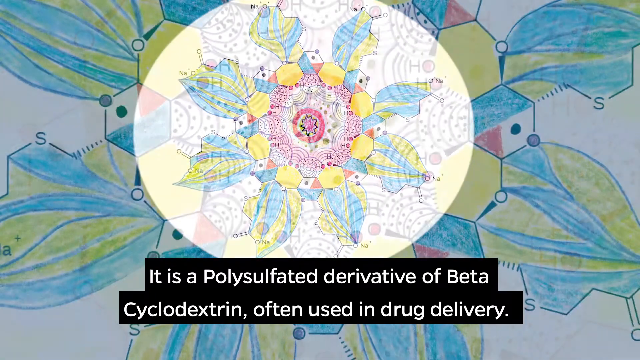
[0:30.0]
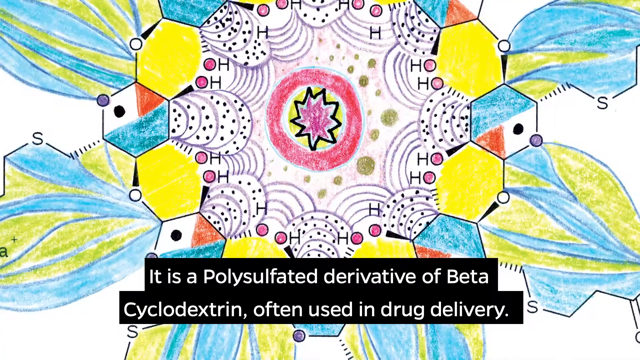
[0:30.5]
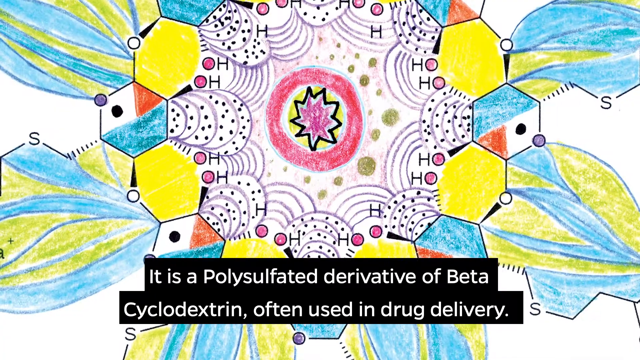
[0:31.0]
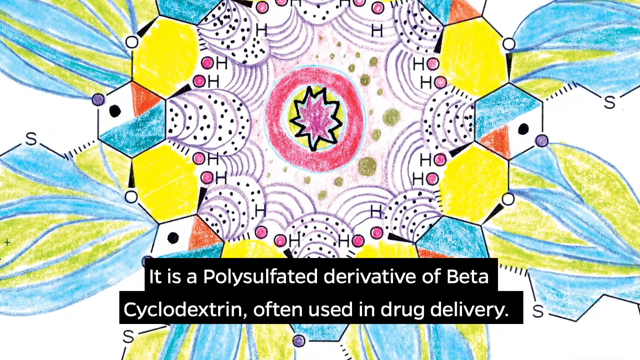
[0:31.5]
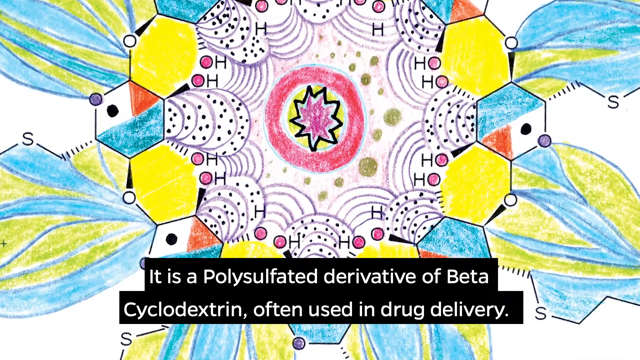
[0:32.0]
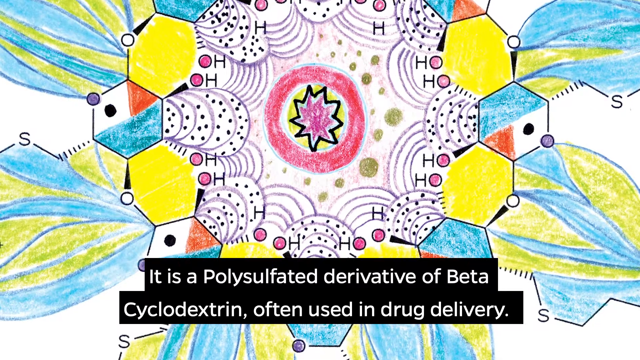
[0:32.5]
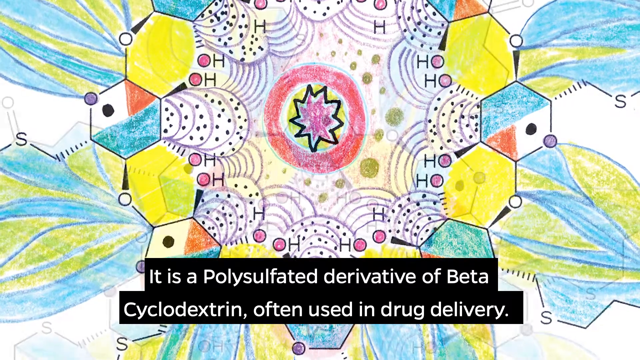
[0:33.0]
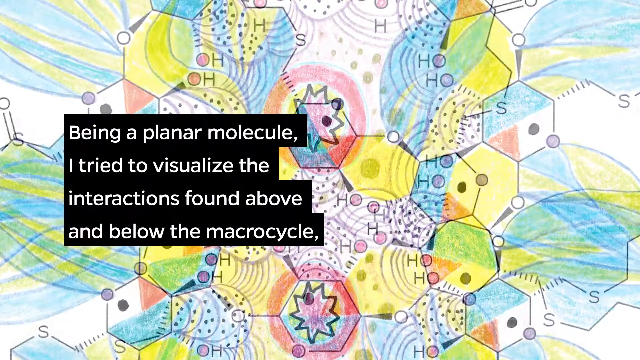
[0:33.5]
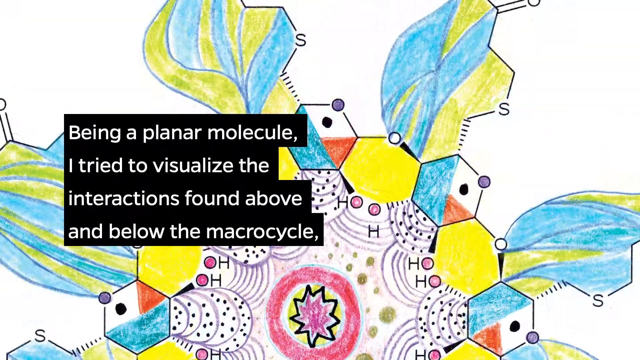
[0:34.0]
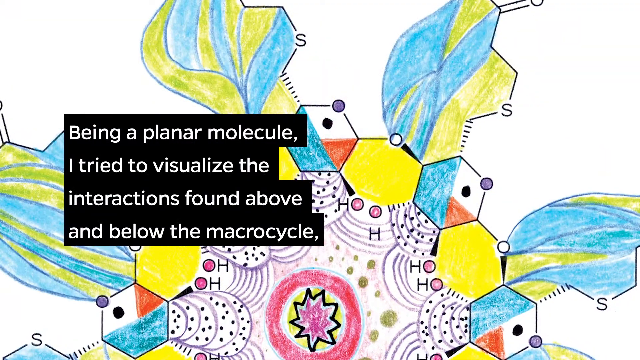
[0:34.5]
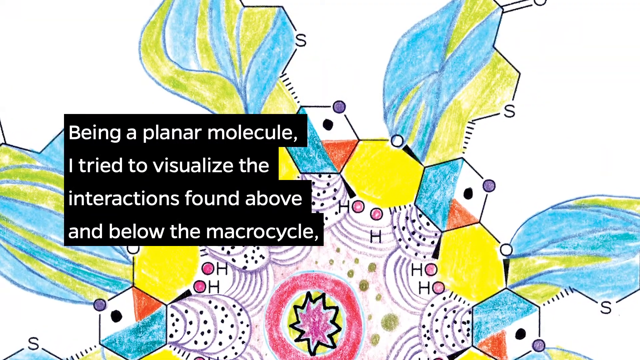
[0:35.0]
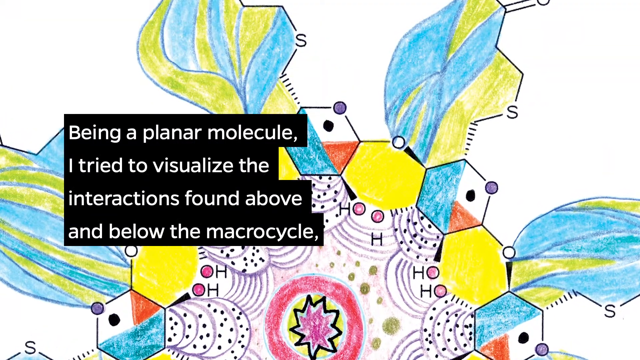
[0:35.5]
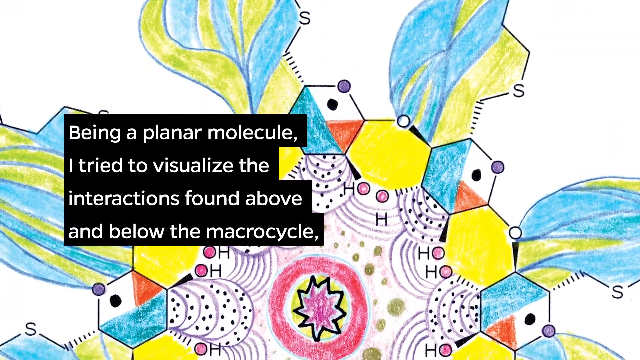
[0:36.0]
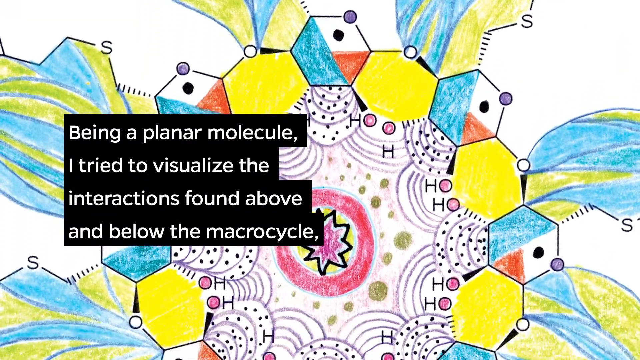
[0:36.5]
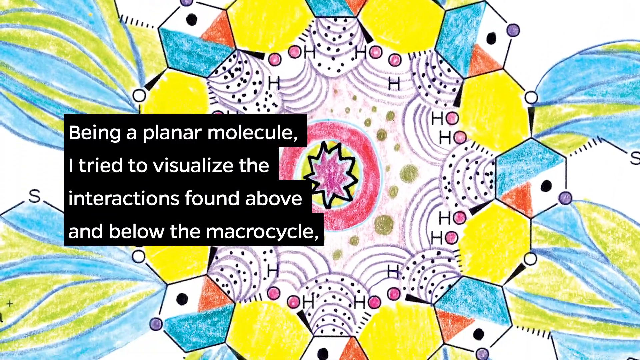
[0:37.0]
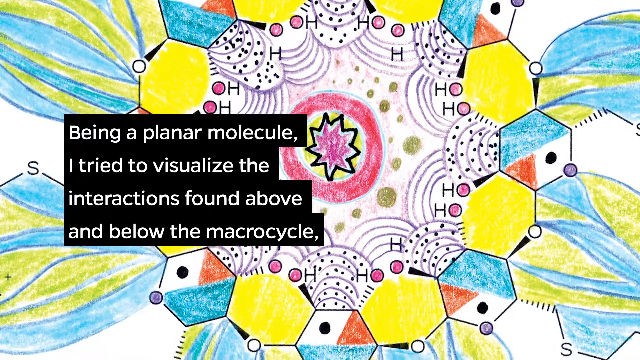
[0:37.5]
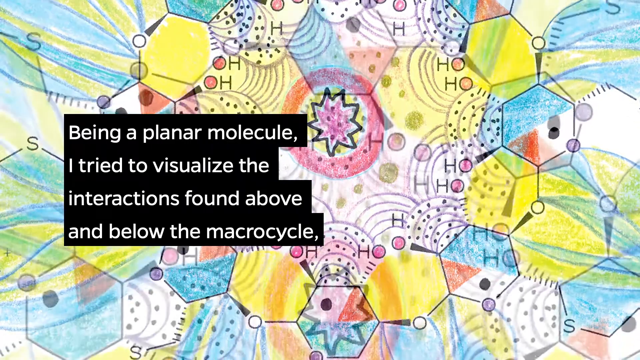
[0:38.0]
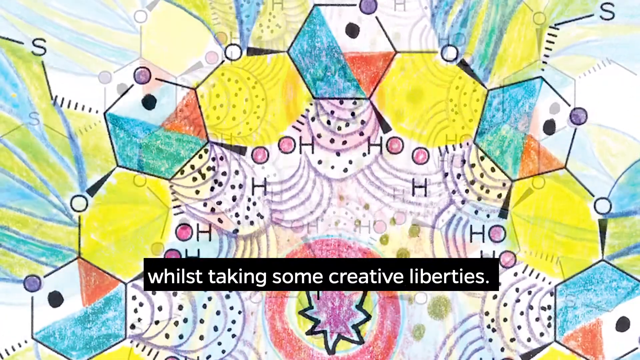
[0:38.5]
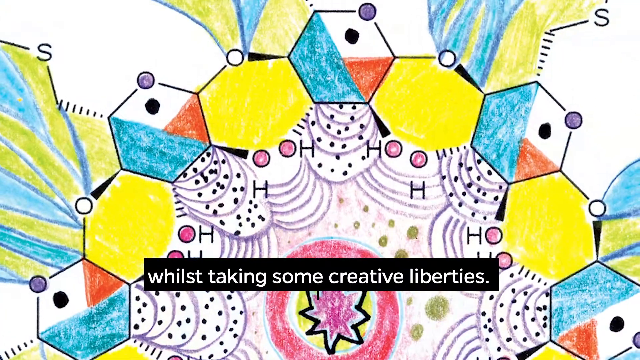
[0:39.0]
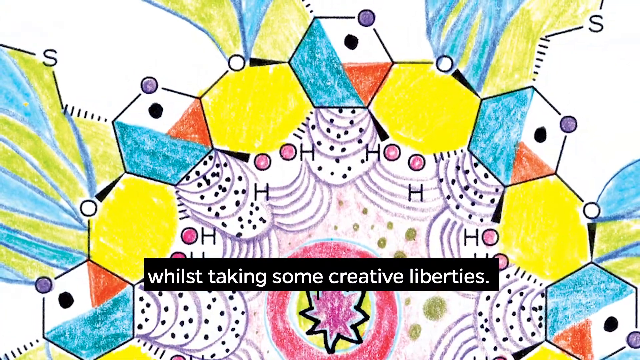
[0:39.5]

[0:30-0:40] The screen continues to show the oval in the top centre containing the hand-drawn illustration. The shot then cross-dissolves into a close-up of the illustration so that it spans the entire screen and extends off the sides, top and bottom. The camera keeps moving in on the image as the caption underneath disappears and black boxes with white text appear in the middle left of the image, reading 'being a planar molecule, I tried to visualise the interactions found above and below the macrocycle'. The video changes to a different shot of the hand-drawn image and then digitally pans down to the left. It then cross-dissolves to another shot of the image while the text underneath changes to say 'whilst taking some creative liberties.'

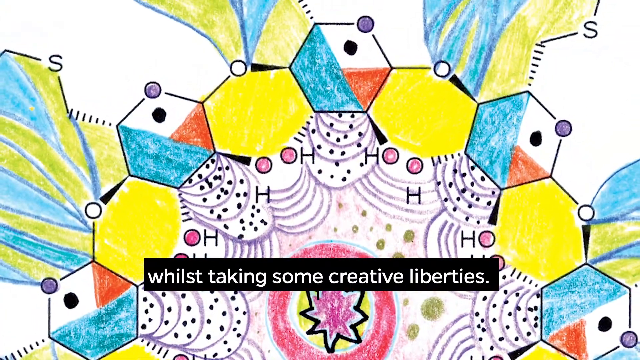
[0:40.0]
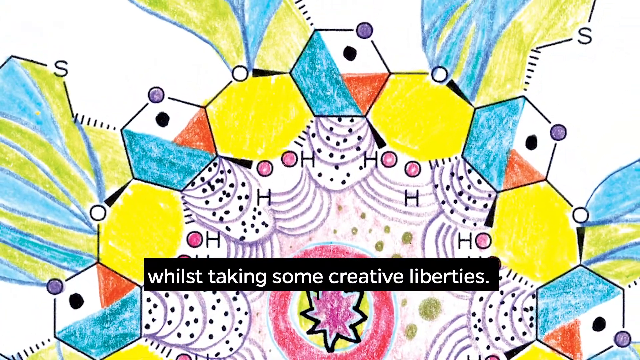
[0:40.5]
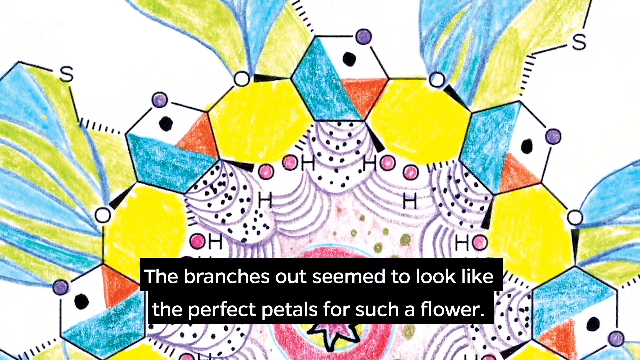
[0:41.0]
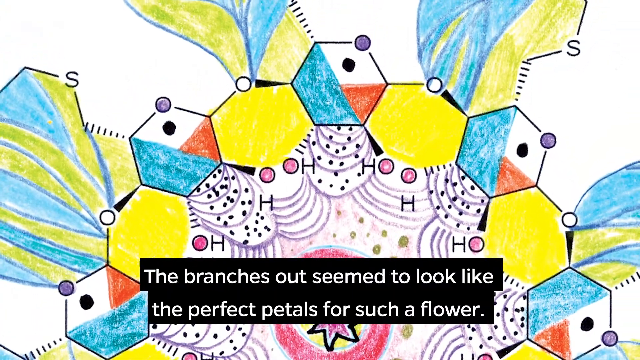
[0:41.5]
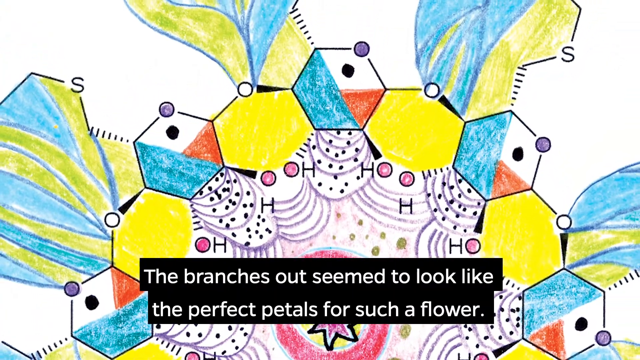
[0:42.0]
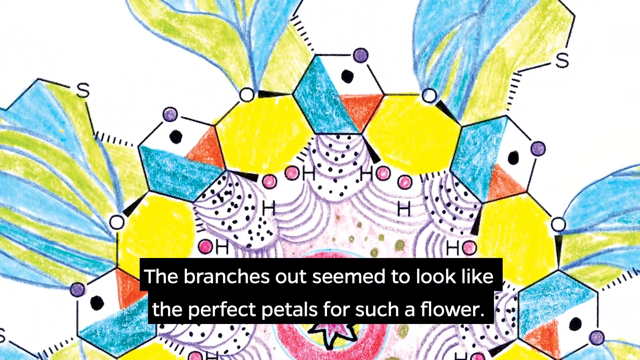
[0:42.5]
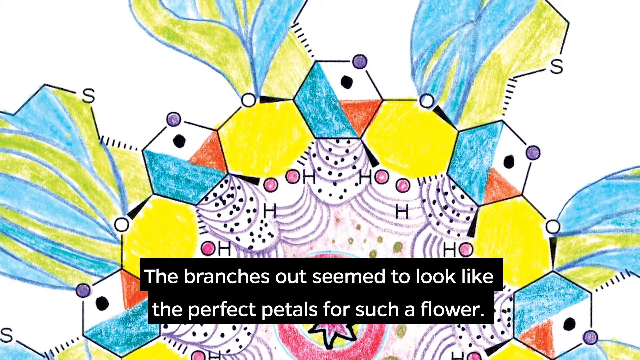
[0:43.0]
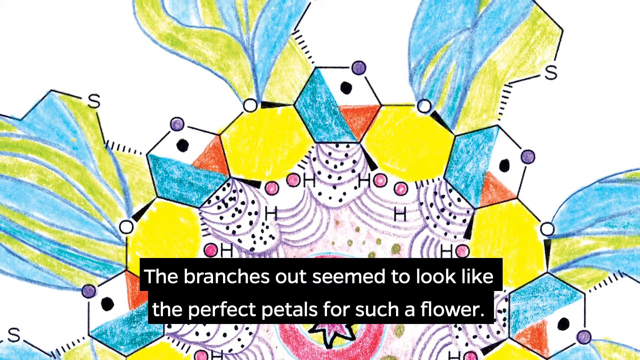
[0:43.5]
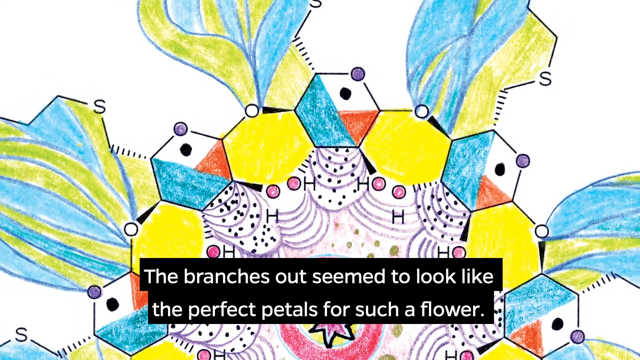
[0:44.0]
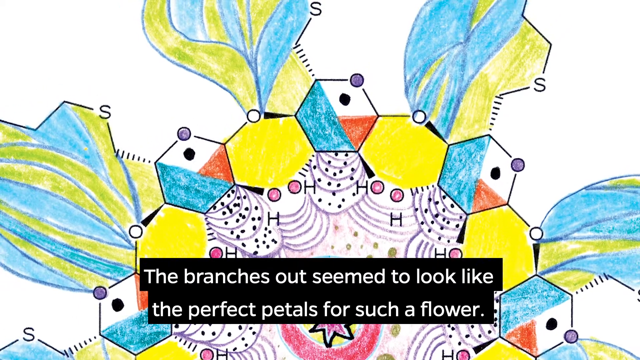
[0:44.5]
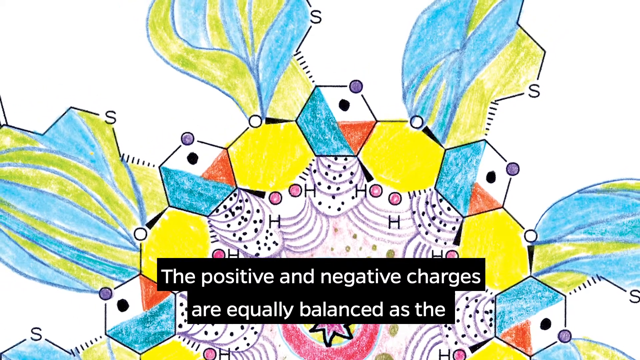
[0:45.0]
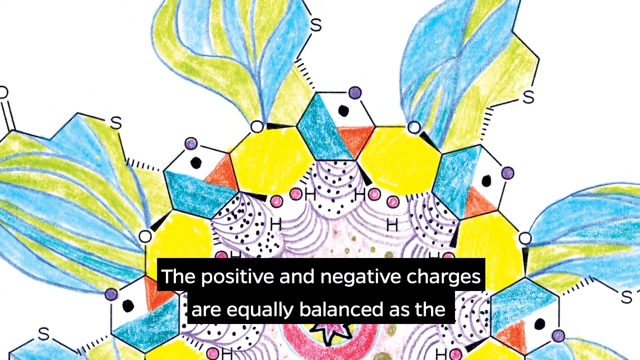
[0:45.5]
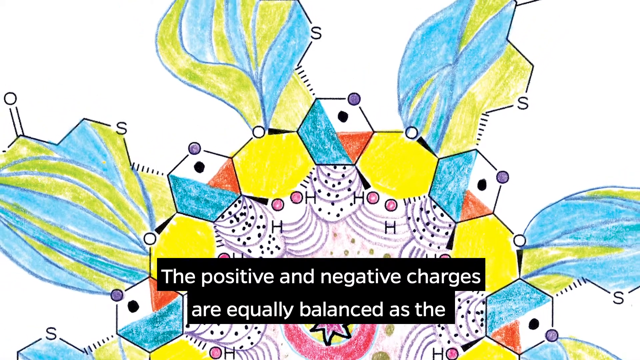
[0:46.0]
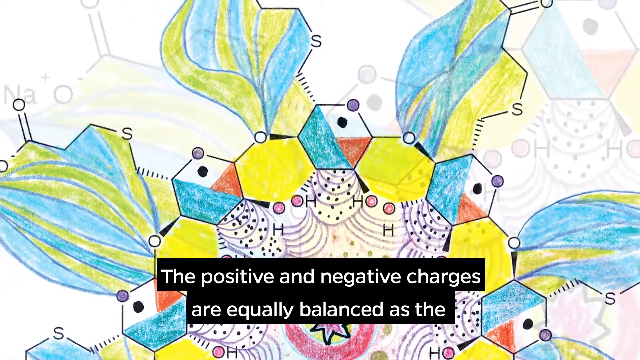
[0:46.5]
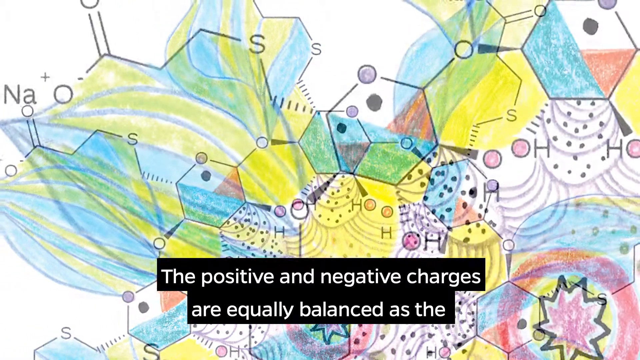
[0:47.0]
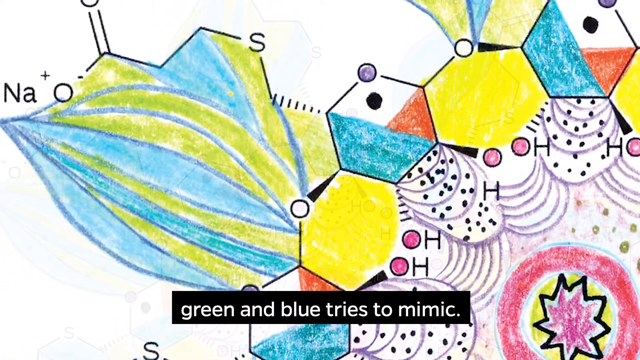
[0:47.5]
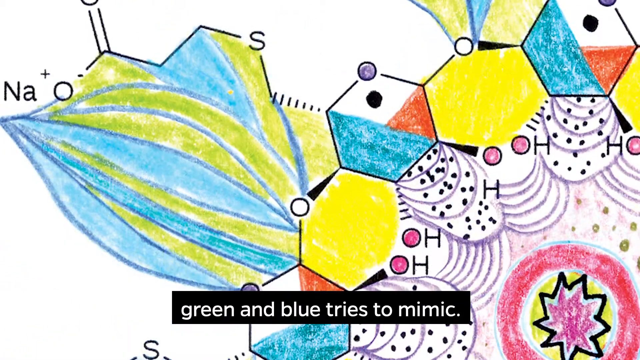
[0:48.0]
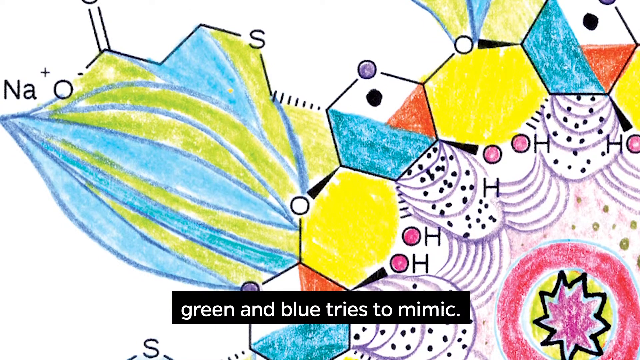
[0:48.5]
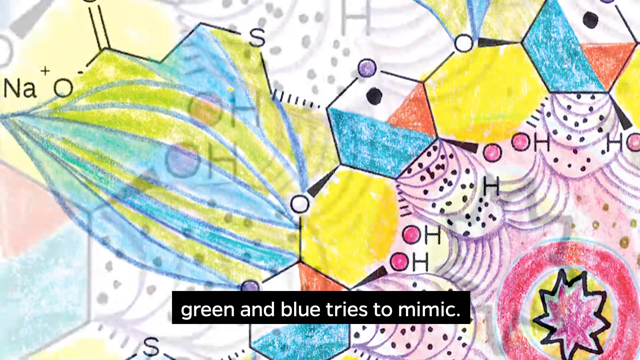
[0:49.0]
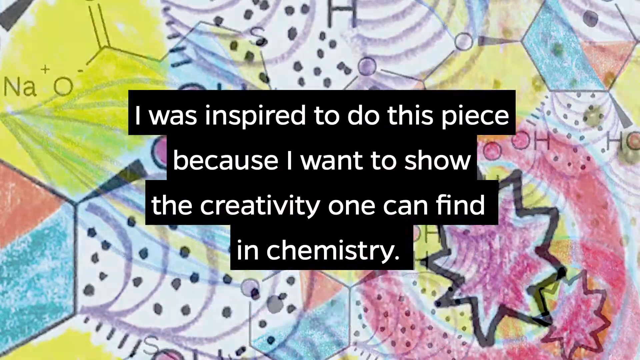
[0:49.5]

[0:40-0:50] The view zooms out from the colourful hand-drawn image, which fills the screen and extends beyond it at the top, bottom, left and right. Black horizontal boxes at the bottom of the screen present white text saying 'the branches out seem to look like the perfect petals for such a flower'. The black boxes then update to present the text 'The positive and negative charges are equally balanced as the'. The slow zoom out continues before a cross-dissolve to a different part of the drawing, slowly panning down, while the text in the black box changes to read 'green and blue tries to mimic'. The video cuts to another very close-up shot of the drawing, panning from top left to bottom right. Large white text in a black box appears in the centre of the image, saying 'I was inspired to do this piece because I want to show the creativity one can find in chemistry'.